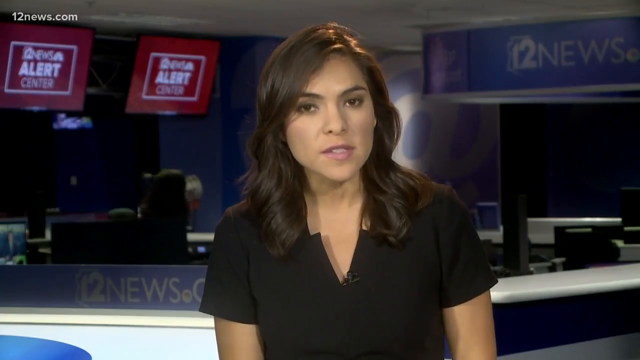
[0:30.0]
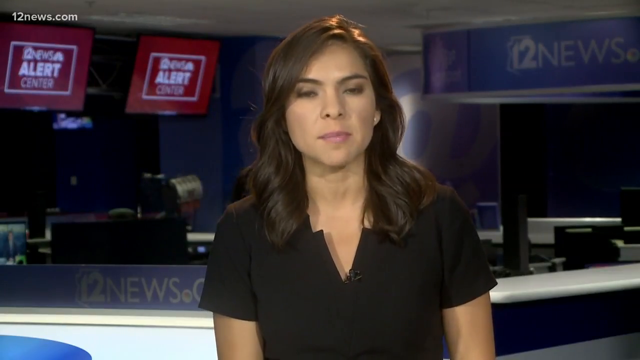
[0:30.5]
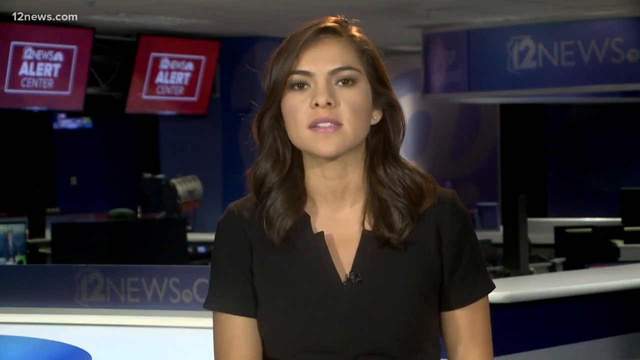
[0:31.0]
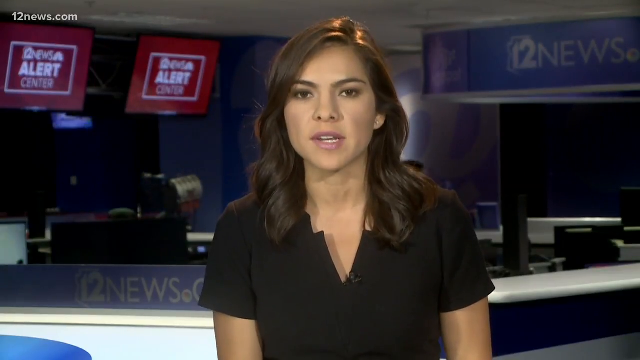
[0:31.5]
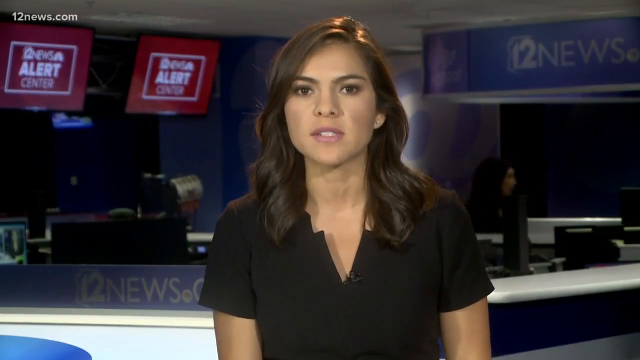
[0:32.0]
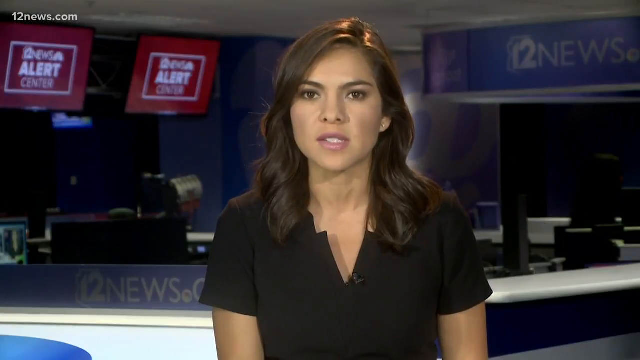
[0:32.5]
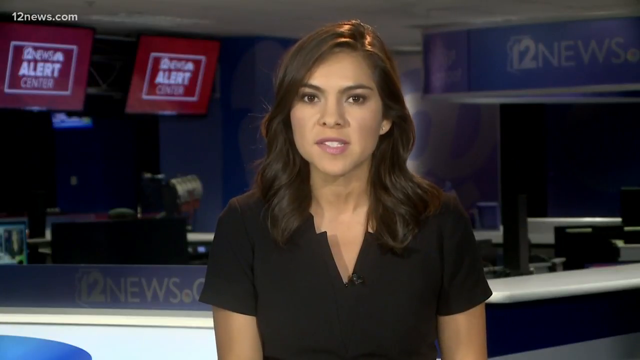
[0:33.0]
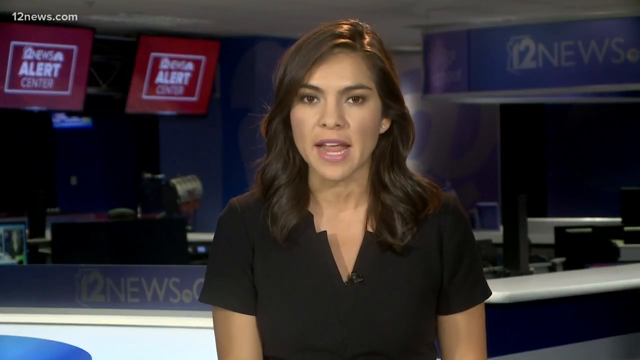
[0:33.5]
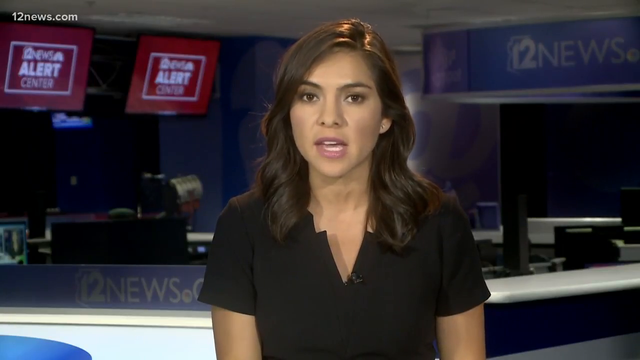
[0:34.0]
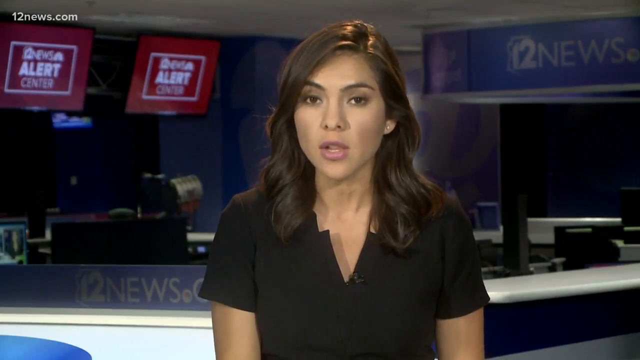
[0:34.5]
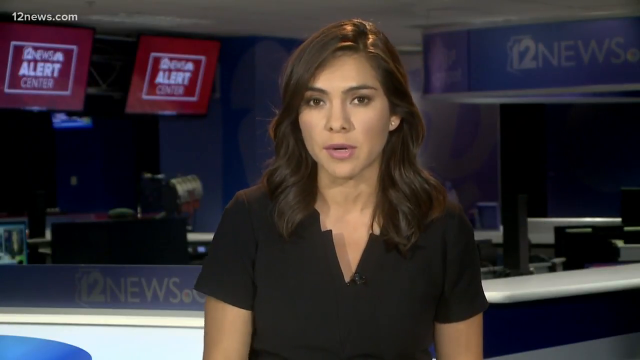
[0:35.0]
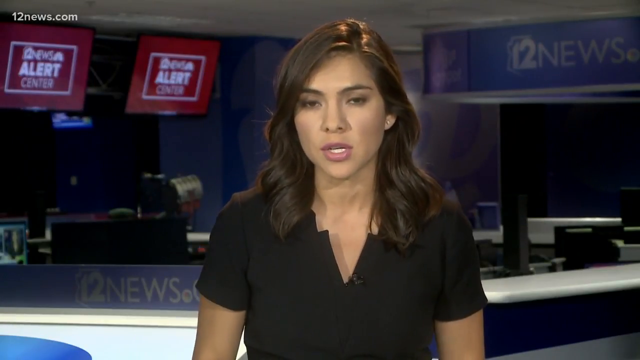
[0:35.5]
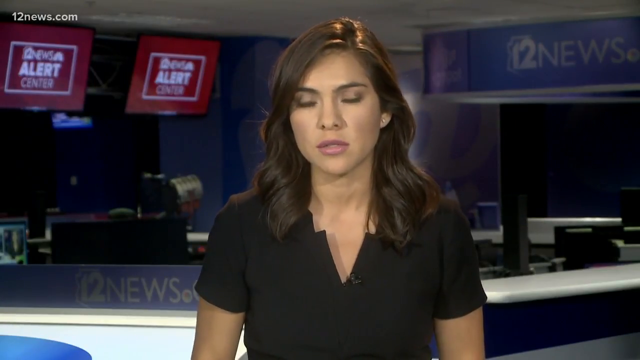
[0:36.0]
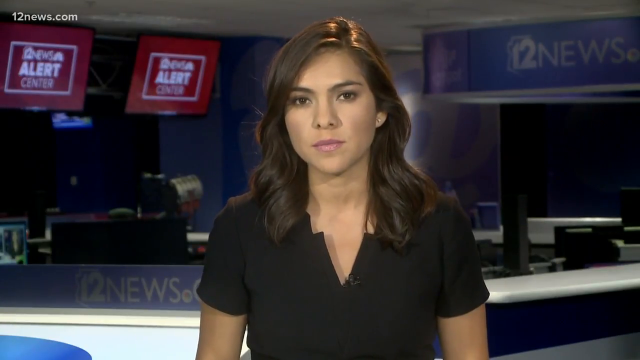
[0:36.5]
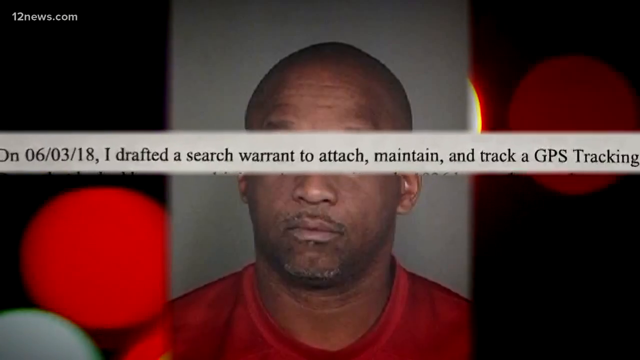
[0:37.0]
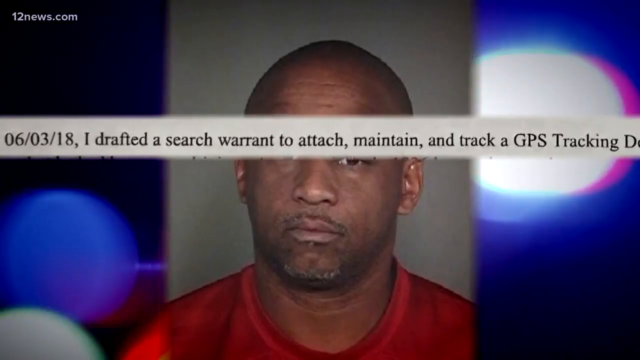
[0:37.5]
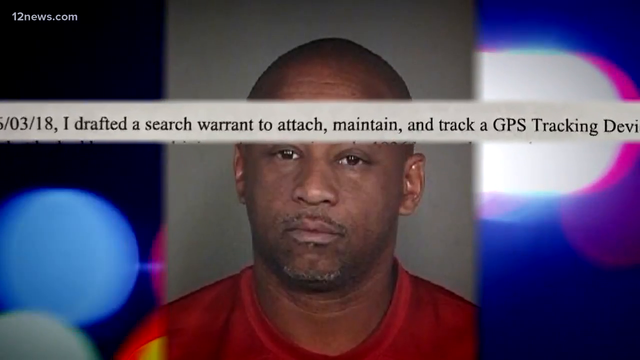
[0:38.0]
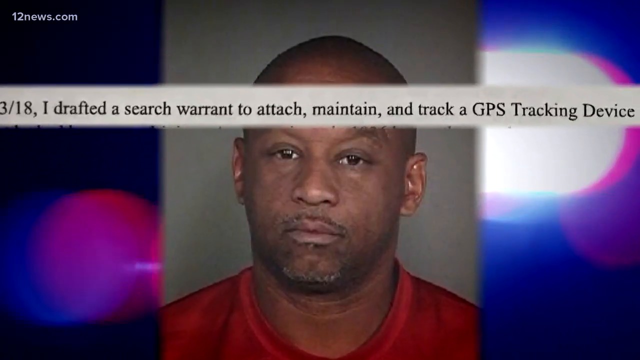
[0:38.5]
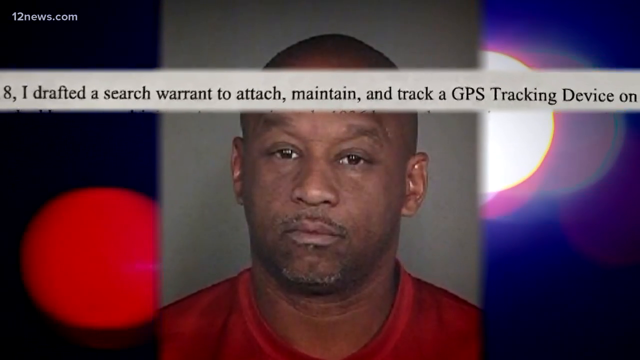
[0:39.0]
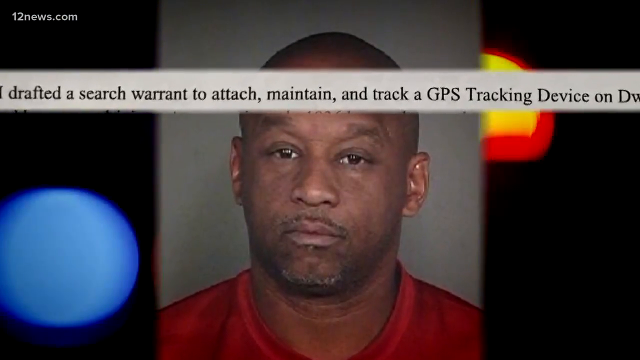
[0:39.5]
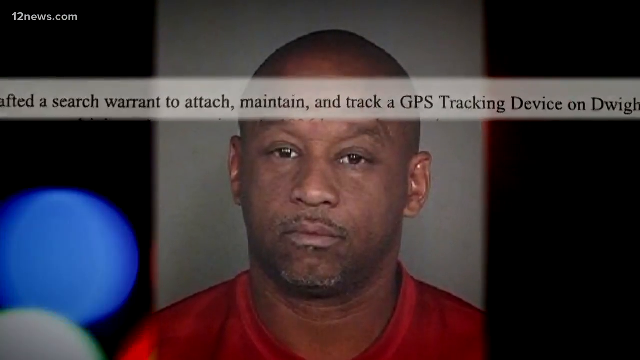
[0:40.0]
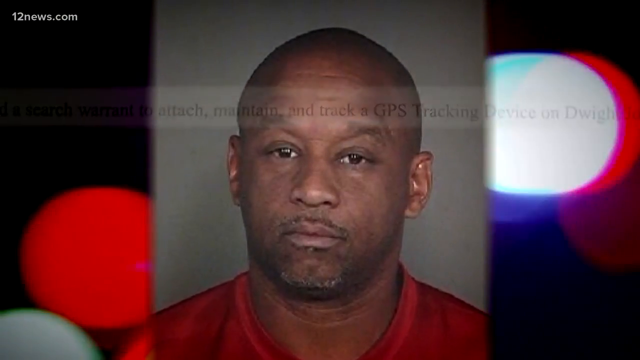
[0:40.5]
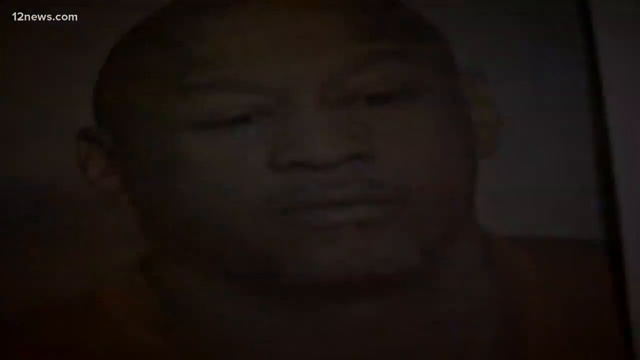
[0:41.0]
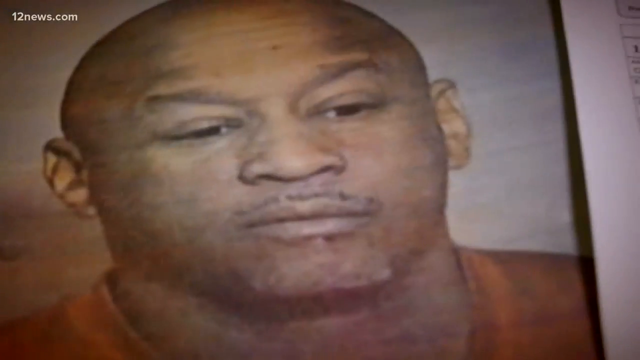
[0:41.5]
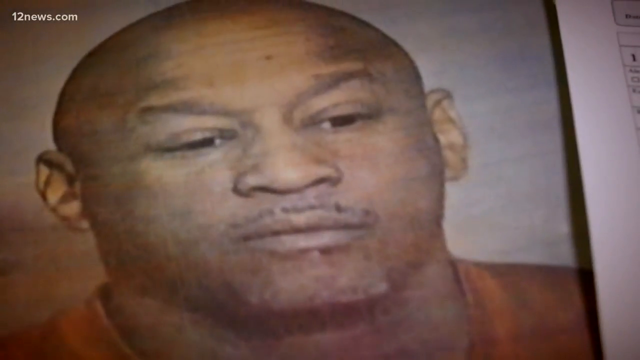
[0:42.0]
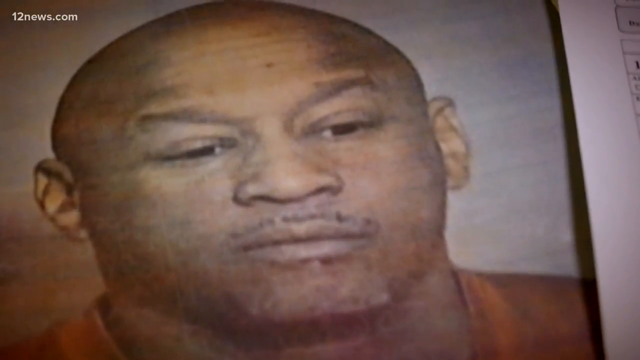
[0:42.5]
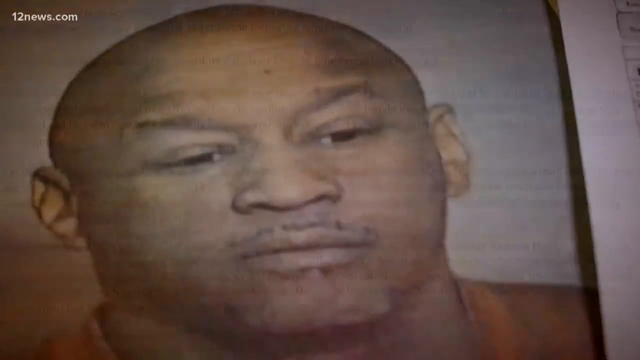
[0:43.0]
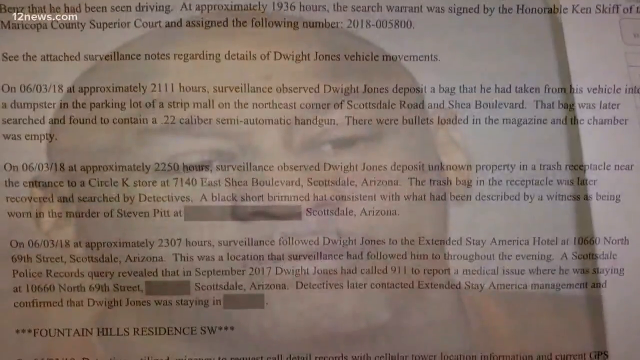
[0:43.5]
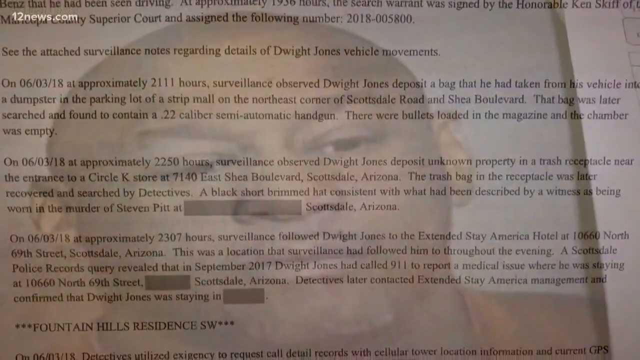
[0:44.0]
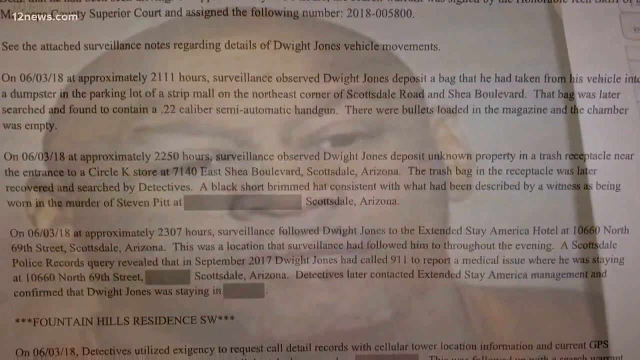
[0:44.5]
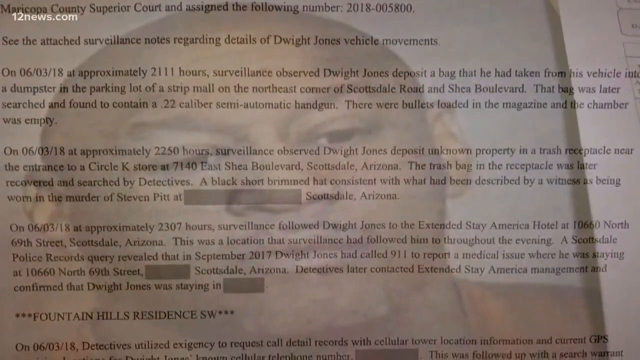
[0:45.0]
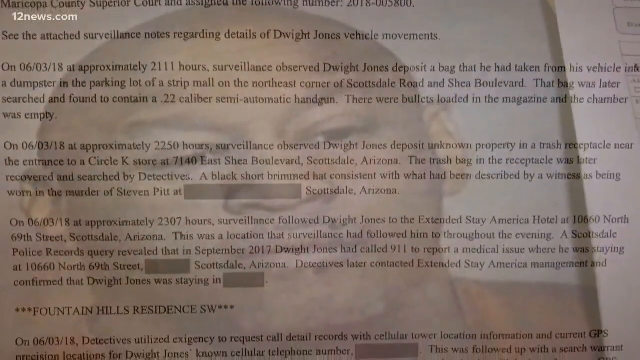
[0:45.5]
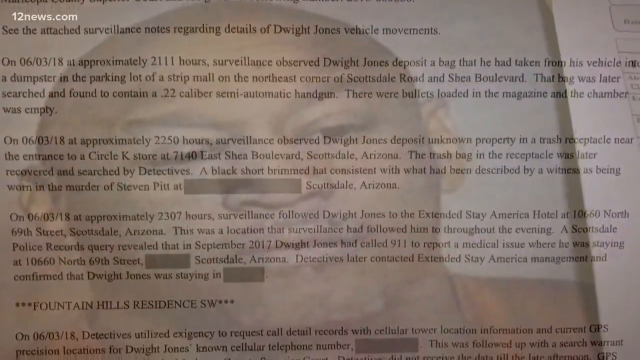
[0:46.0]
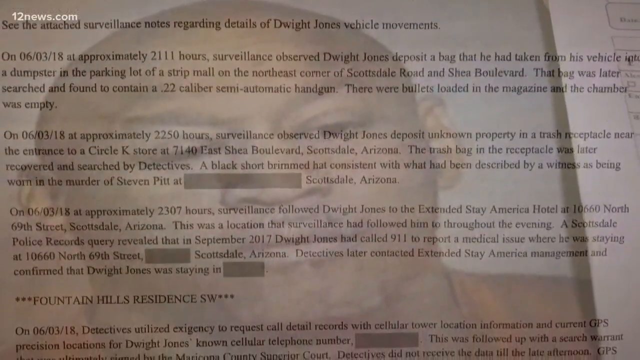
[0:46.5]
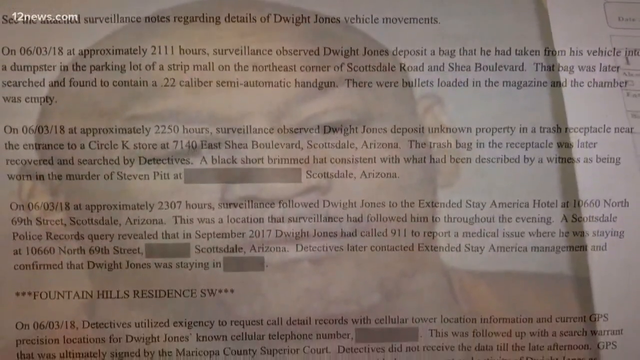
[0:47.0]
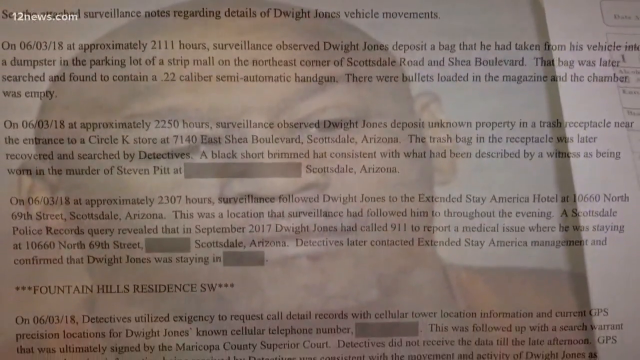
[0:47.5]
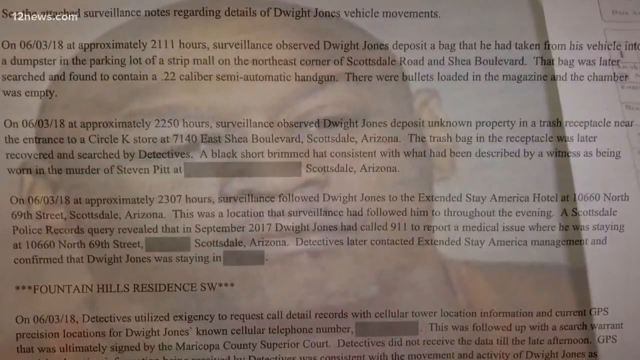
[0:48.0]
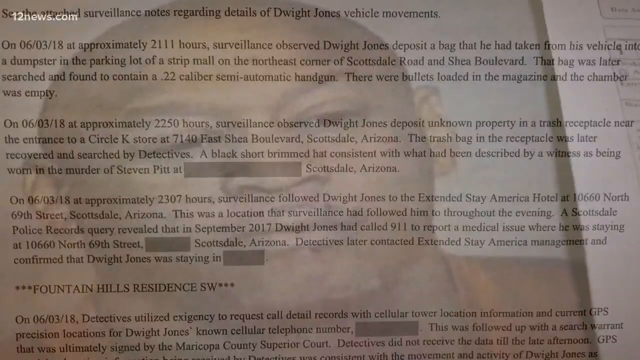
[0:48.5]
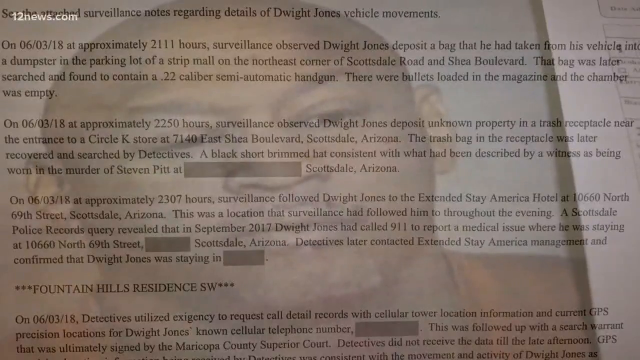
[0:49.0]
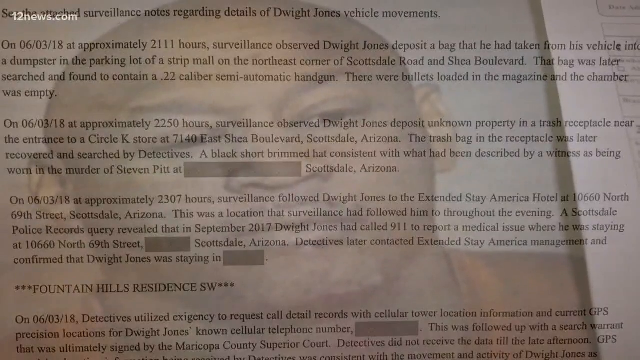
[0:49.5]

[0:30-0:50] A Channel 12 News report shows the 12news.com logo in the upper left corner. It begins with a female presenter in a studio with the 12 News logo on the wall behind her. On the left are two video screens on the wall that say "12 News Alert Center". She has long dark hair, wears a short-sleeved black top, and speaks directly to the camera. The scene then switches to a photograph of a man with flashing lights on either side of the photograph. A white text bar crosses the screen over his eyes, containing text that says "06/03/18 I drafted a search warrant to attach, maintain, and track a GPS tracking device on Dwight..." and then it disappears. As the bar moves up slightly, the man's eyes become visible. The scene switches to another photo of him, and then police report text appears over the screen, transparent as if it is appearing over his photograph.